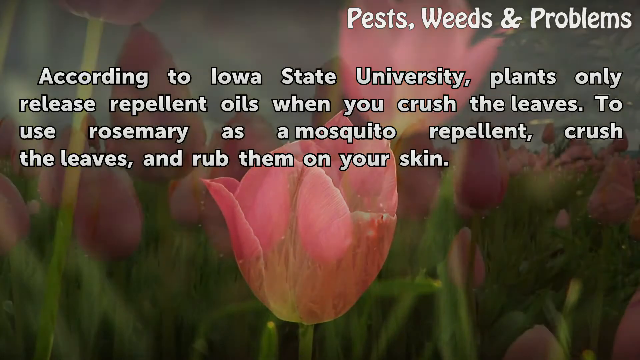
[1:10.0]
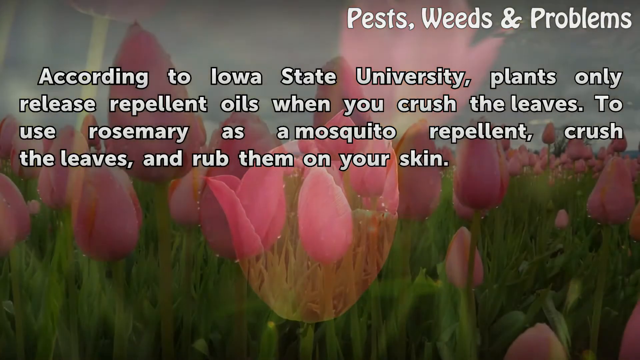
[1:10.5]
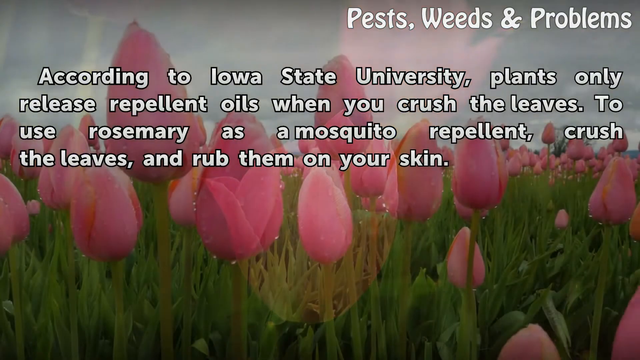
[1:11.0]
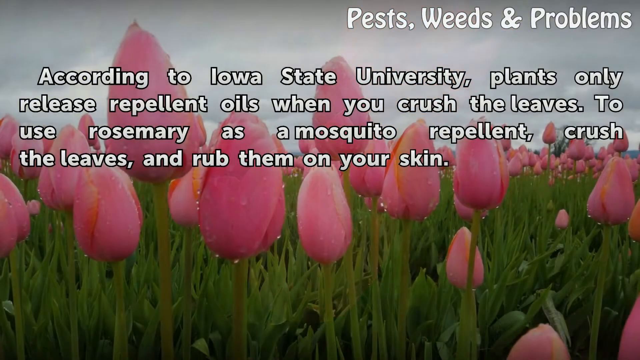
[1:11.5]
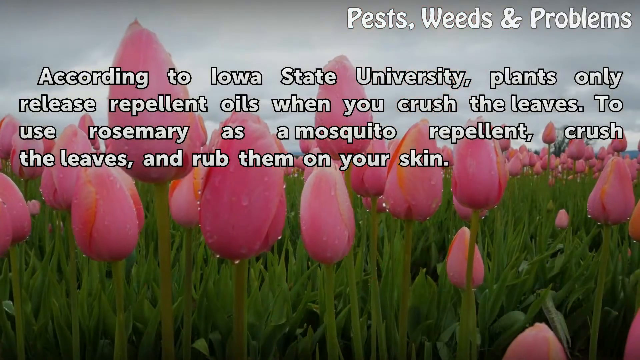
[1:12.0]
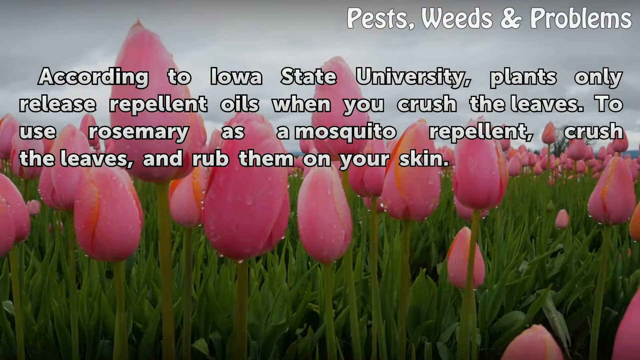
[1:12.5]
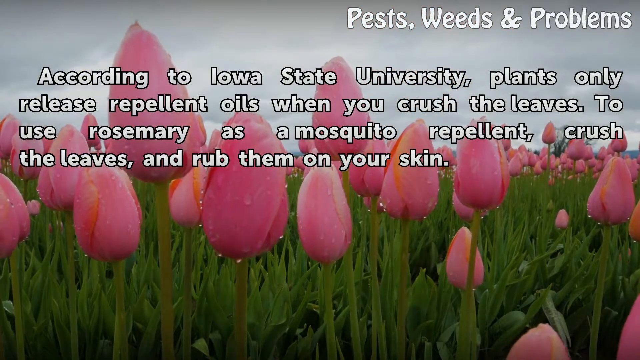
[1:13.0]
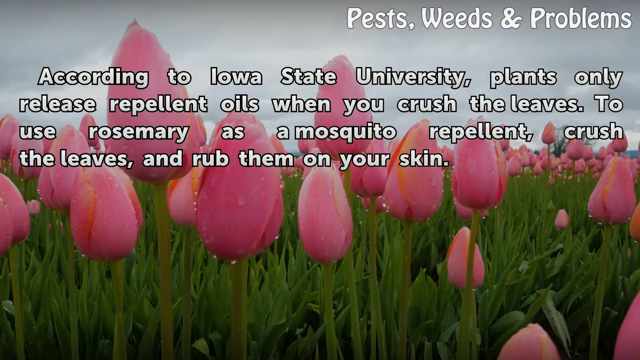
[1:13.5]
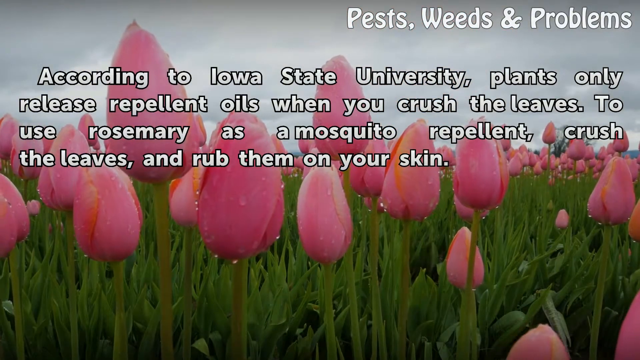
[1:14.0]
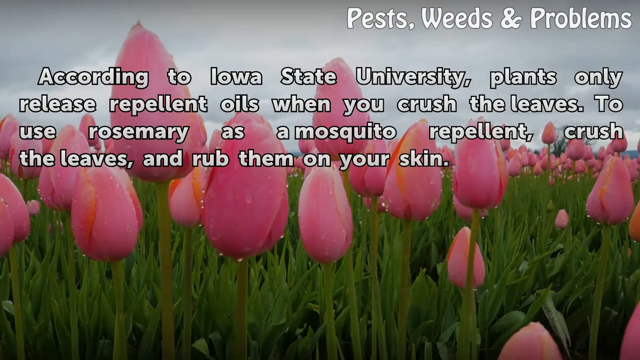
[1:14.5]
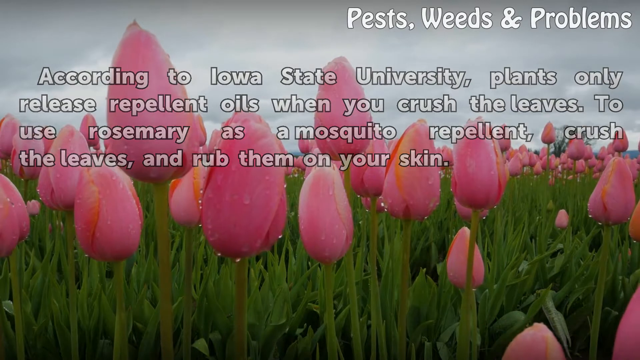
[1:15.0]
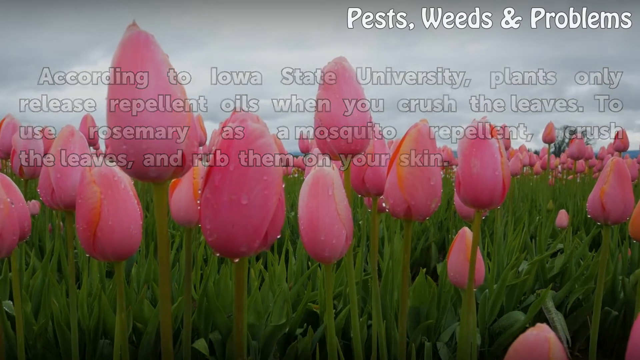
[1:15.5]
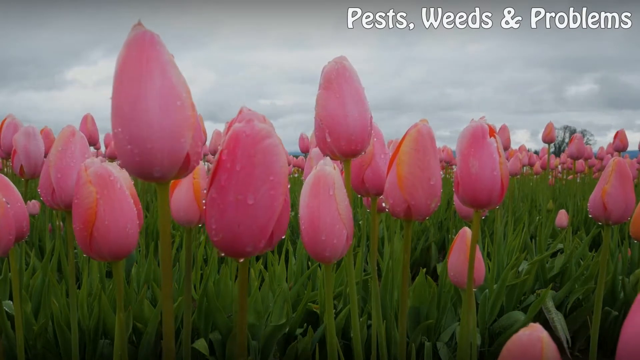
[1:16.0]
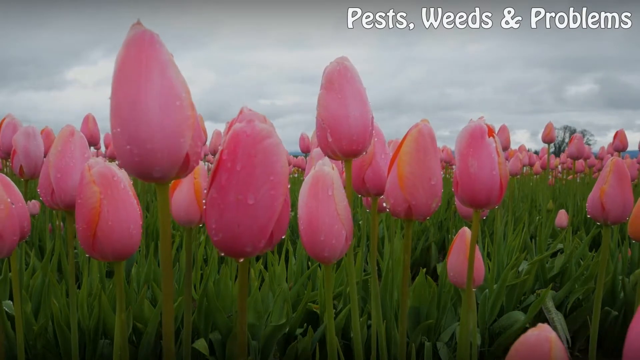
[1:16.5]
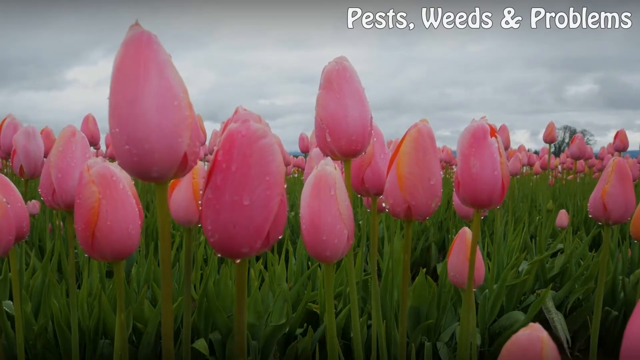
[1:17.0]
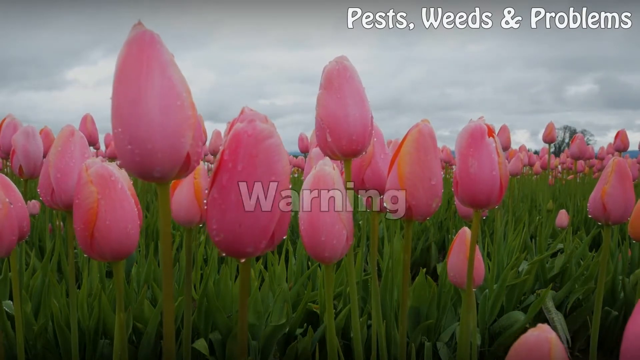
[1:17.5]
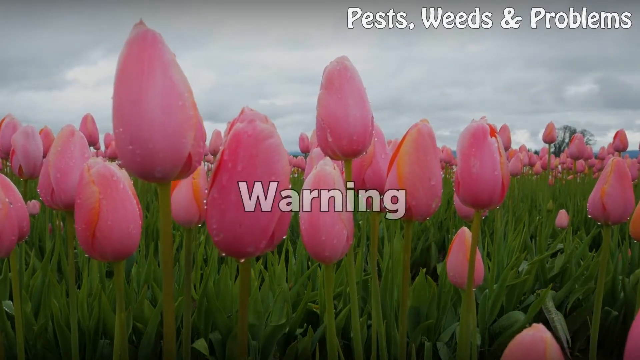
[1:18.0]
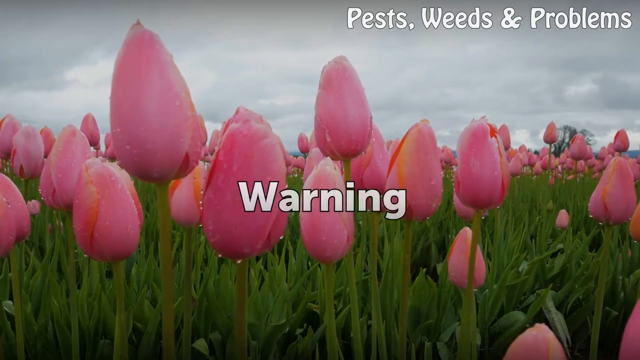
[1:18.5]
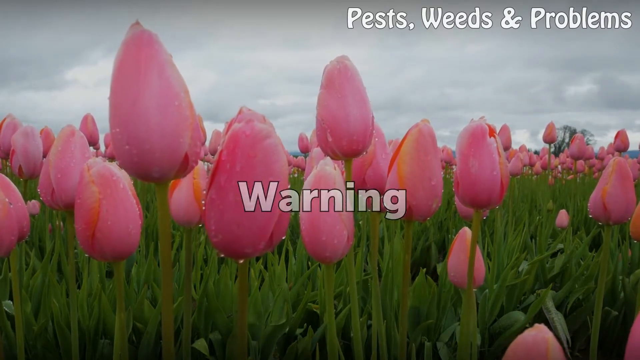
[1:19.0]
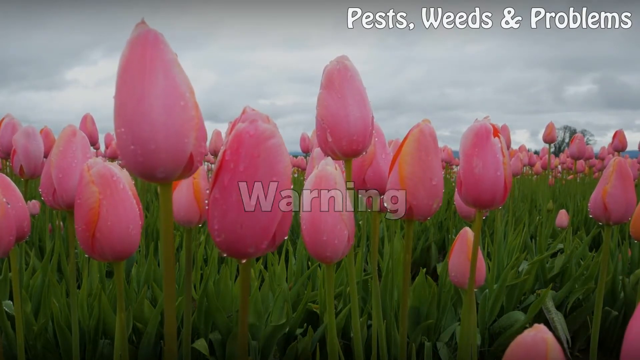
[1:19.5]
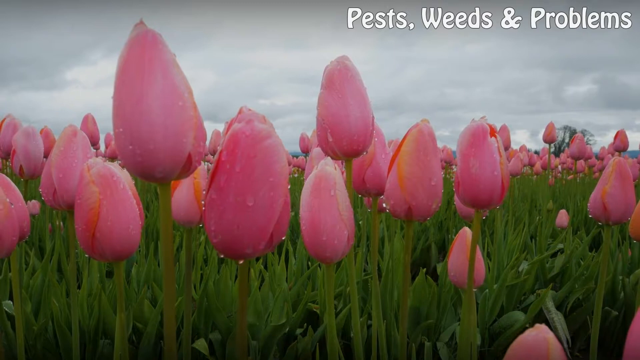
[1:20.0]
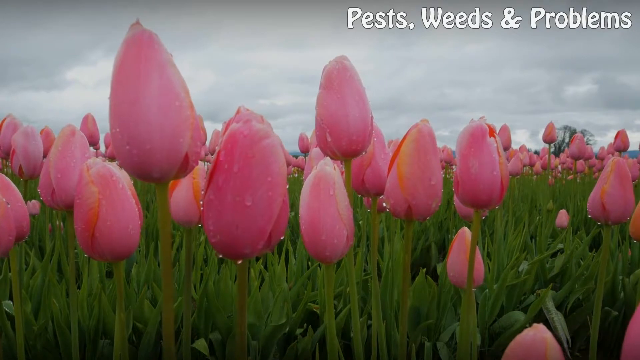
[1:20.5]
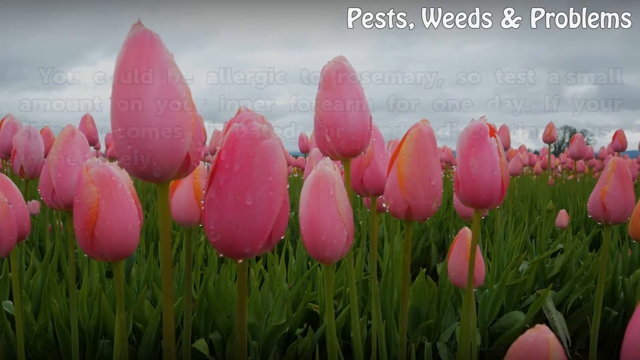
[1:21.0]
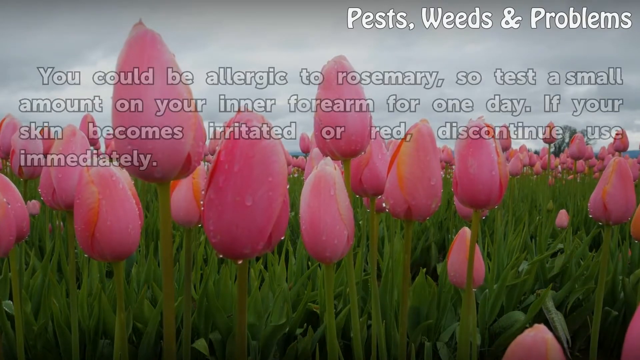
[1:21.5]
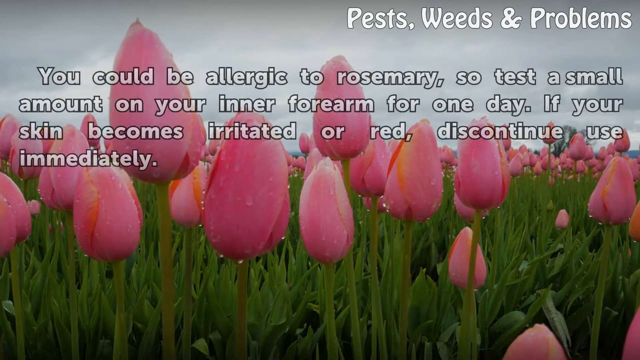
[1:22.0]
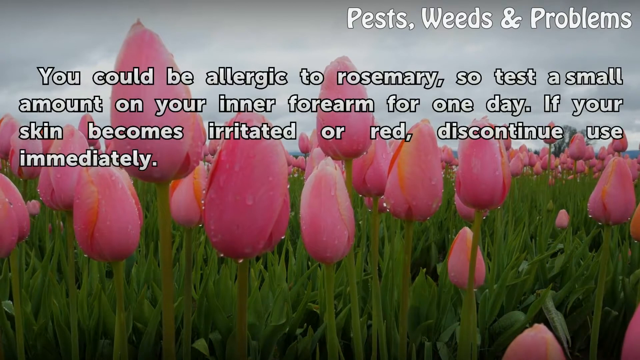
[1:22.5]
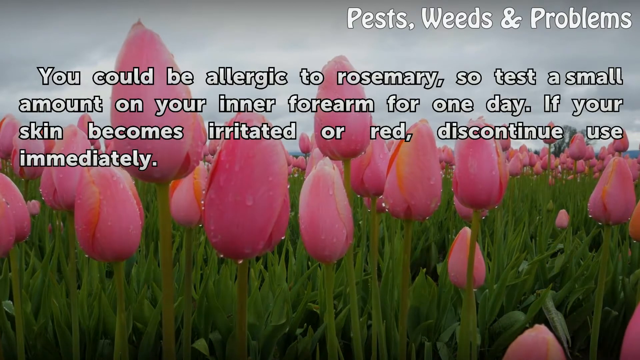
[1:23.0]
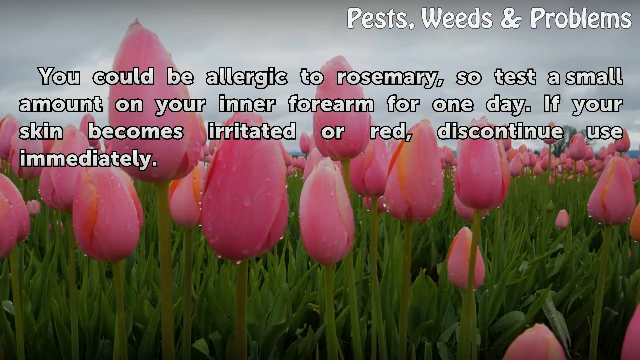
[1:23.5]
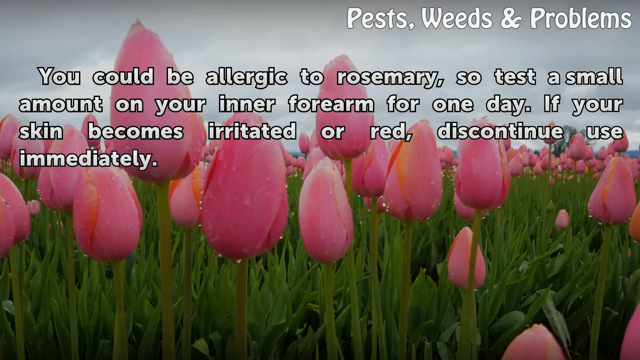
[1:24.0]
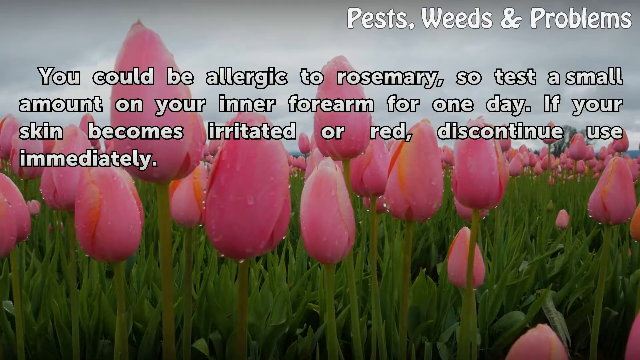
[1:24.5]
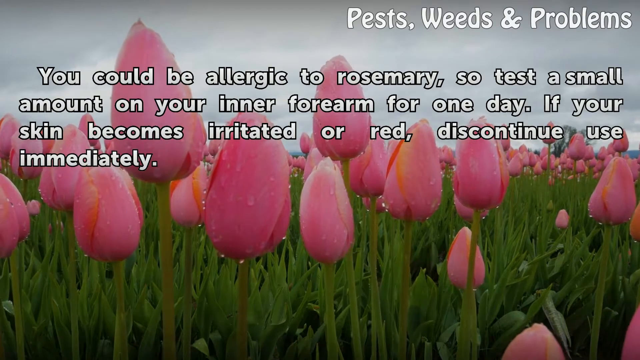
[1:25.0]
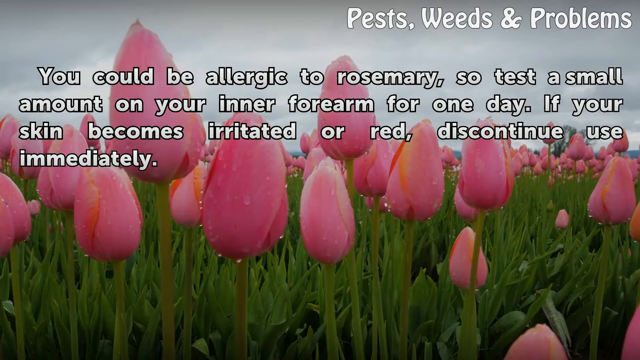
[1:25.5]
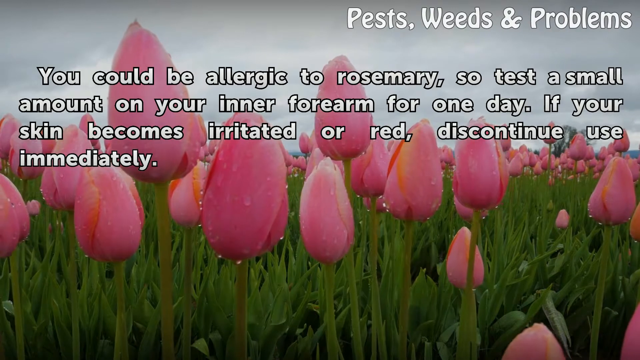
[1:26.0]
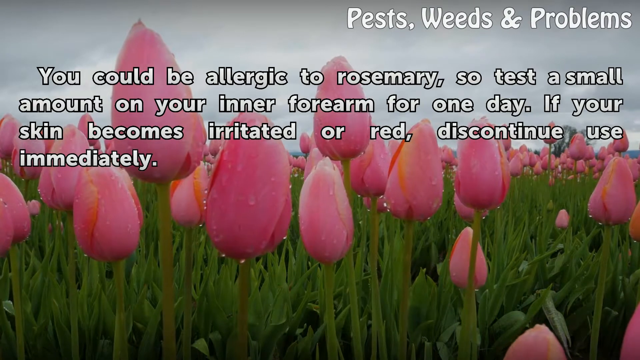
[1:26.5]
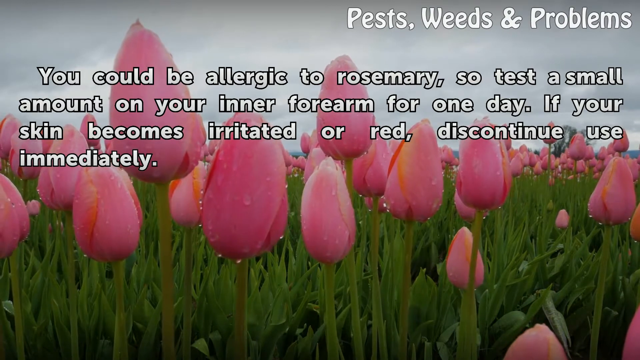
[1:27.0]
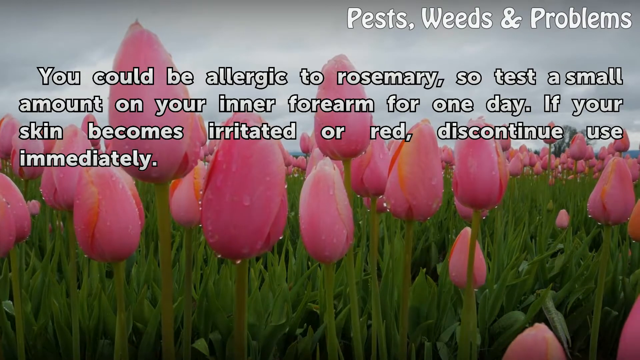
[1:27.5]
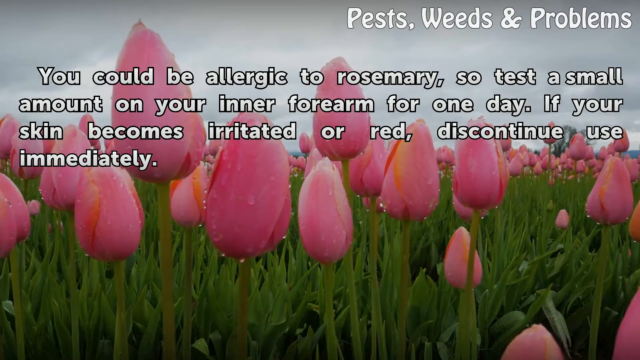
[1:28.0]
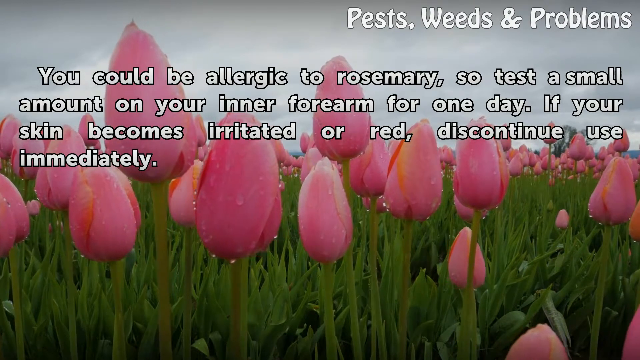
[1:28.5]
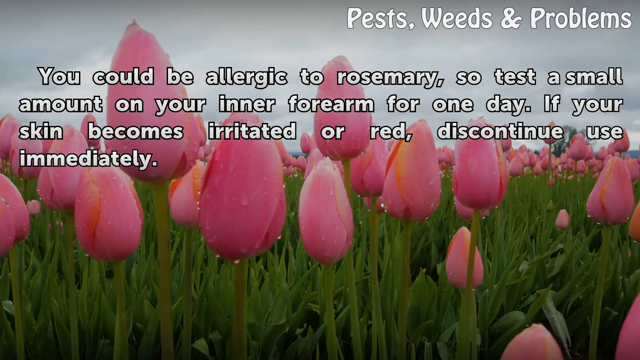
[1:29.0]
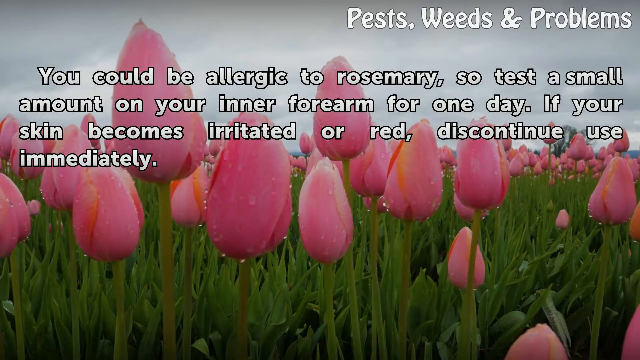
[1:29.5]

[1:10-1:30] The background changes to green weeds all the way across under a kind of dark blue, almost stormy-looking sky, with pink tulips lined all the way across, probably about 50 of them, closer on the left side and in the distance on the right side. Little water droplets are visible around the outside edges of them. They are all kind of closed up, none of them opened, and they sway back and forth a little in the wind. The text goes off the screen, "warning" pops up in the center, and then more white text with a black border reads: "you could be allergic to rosemary, so test a small amount on your inner forearm for one day. If your skin becomes irritated or red, discontinue use immediately." The plants and leaves keep moving a little to the left and right as the wind continues to blow. Far in the background where the sky is, on the right side about two inches in, there is a big green tree. Some of the tulips, just right of center and two toward the left side, have a little orange to them.